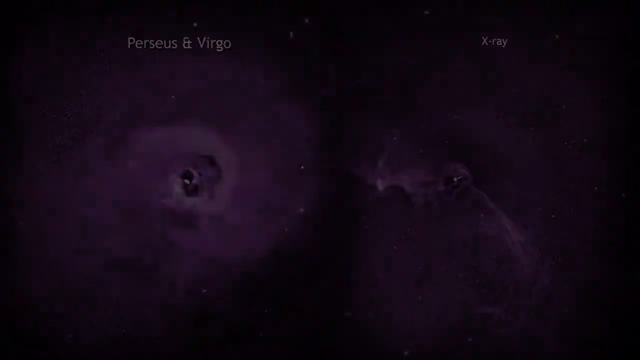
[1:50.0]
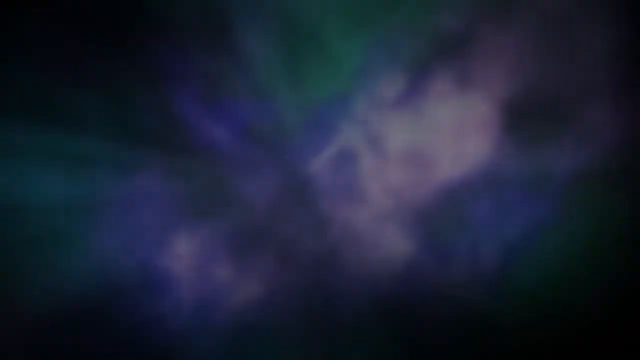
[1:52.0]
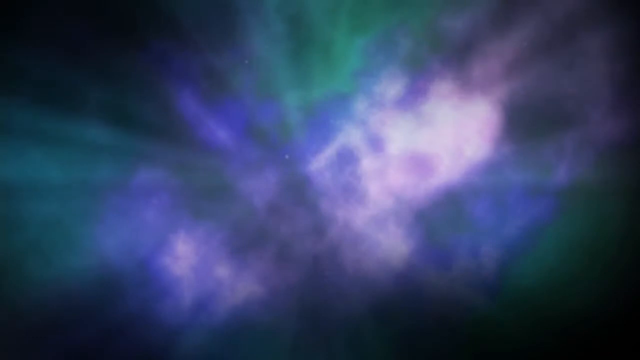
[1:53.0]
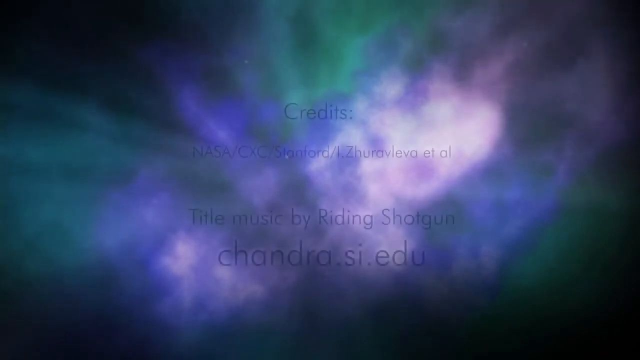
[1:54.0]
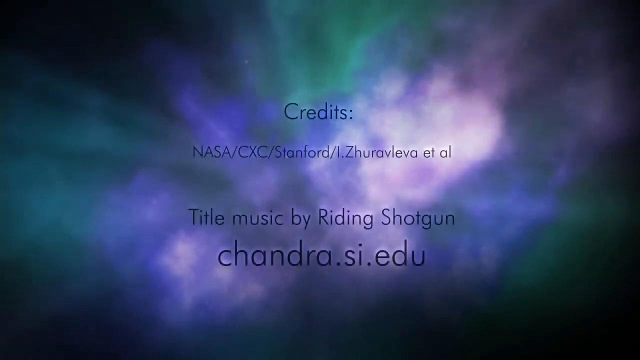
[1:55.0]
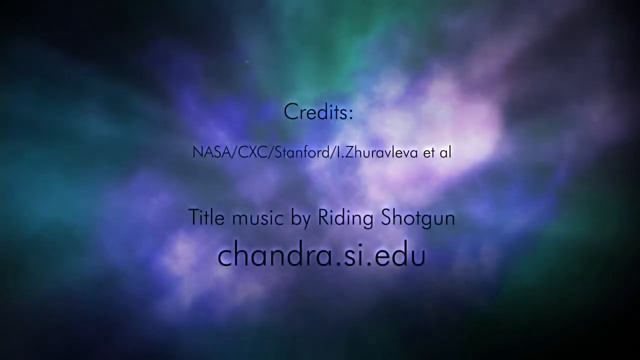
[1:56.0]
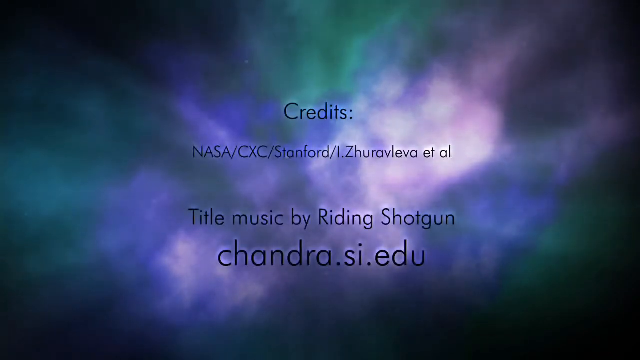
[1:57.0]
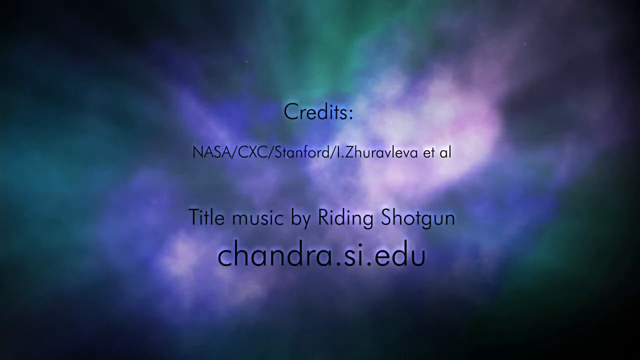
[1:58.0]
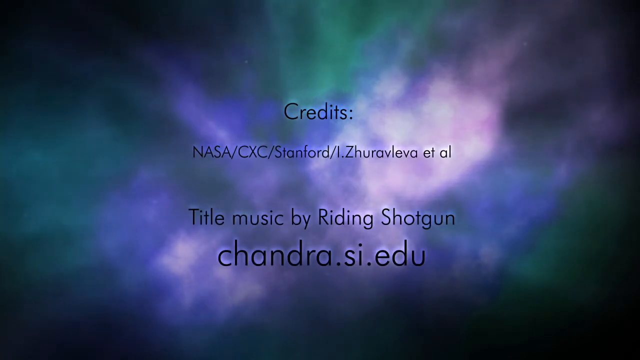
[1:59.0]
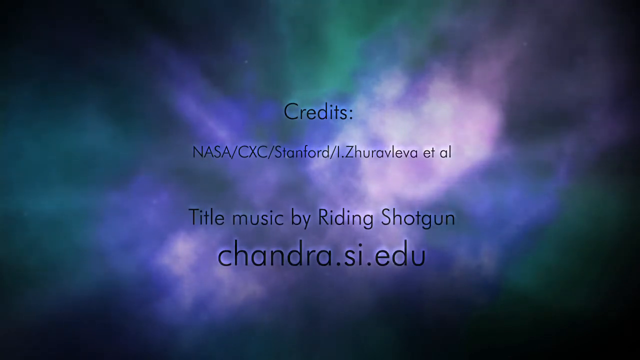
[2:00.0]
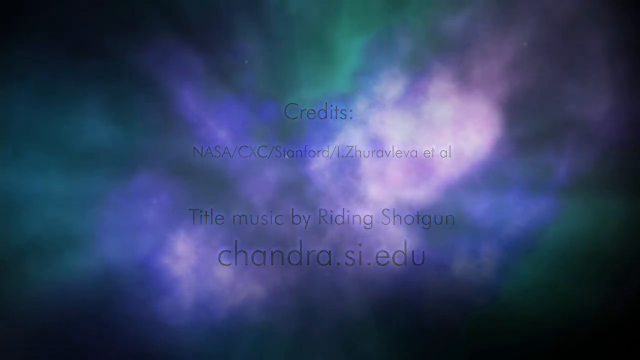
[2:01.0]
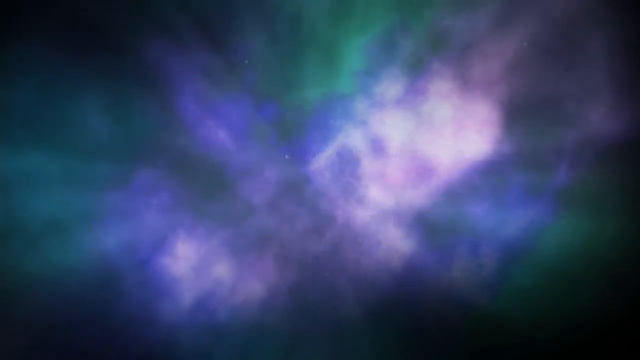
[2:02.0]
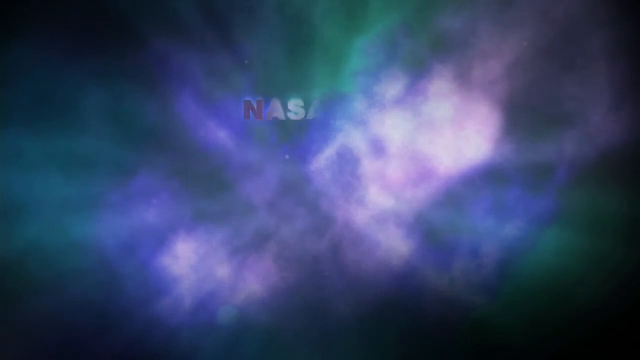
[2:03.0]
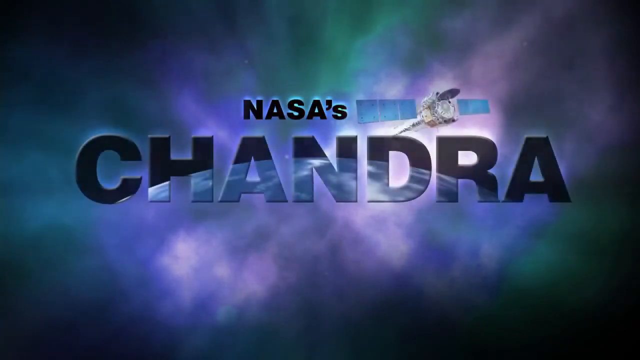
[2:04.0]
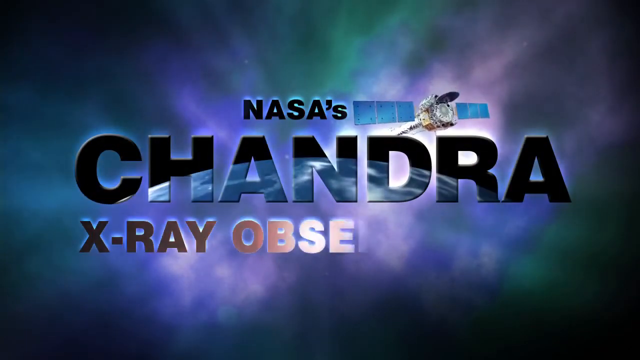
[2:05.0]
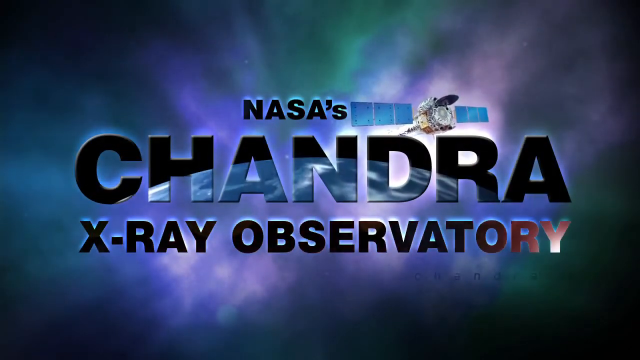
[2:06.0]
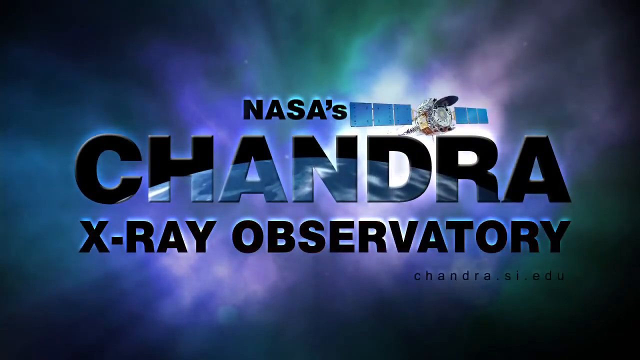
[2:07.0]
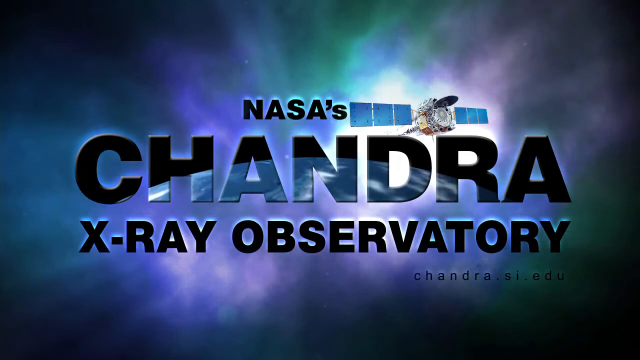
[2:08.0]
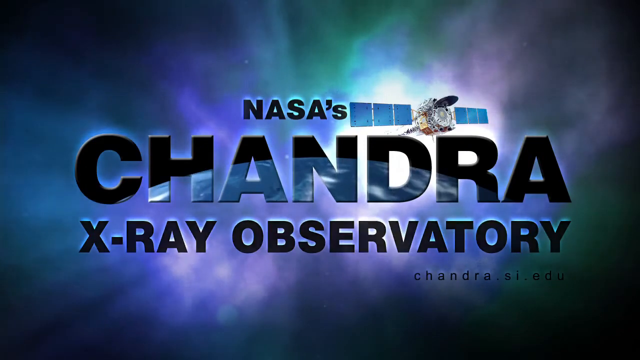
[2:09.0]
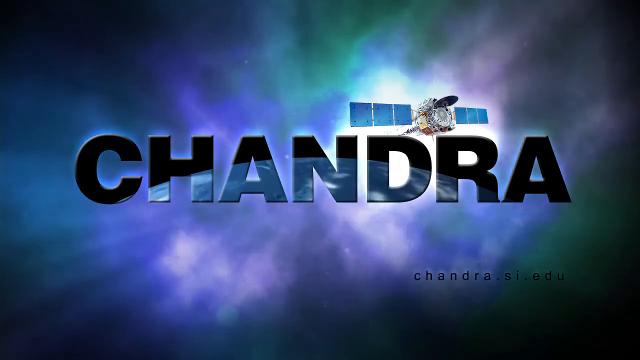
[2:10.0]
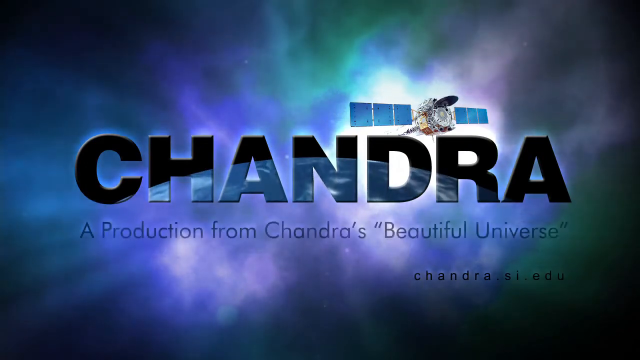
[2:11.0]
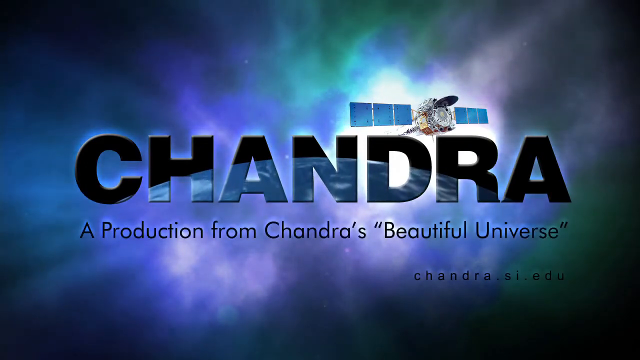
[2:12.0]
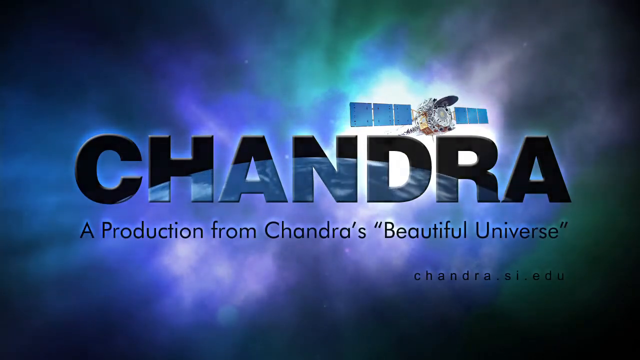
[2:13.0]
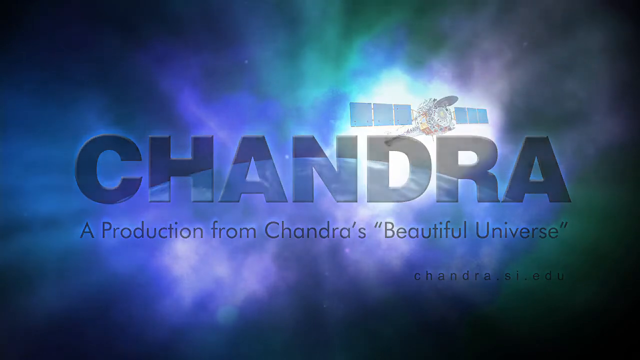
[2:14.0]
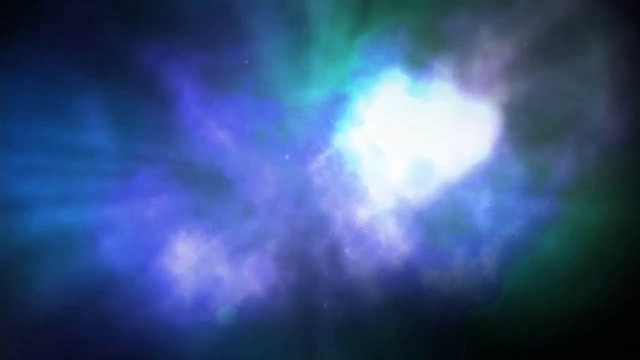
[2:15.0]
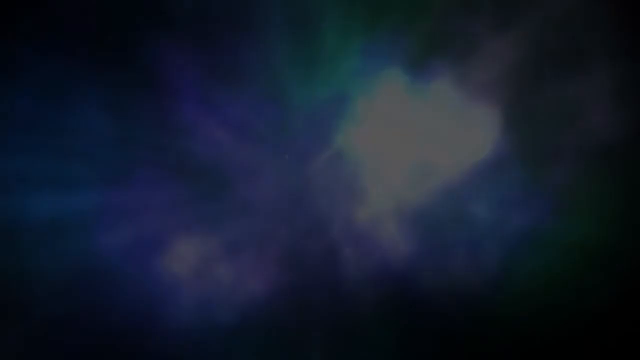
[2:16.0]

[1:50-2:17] The Virgo cluster on the right side of the screen still has the x-ray text on top of it, while the left image has the text "Perseus and Virgo". In the center, the two move toward each other and overlap. The final screen features the same animation of the bright, slightly blurred sky. It shows a website for the video's credits, which seems to be from a Stanford NASA website, along with the music title "Riding Shotgun" and, underneath it, the website "Chandra.si.edu". The caption fades away before another logo appears reading "NASA's Chandra X-ray Observatory". All the text disappears except "Chandra", and a short sentence underneath reads "a production from Chandra's beautiful universe".